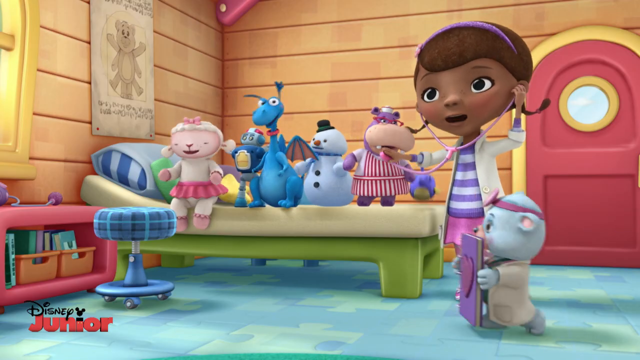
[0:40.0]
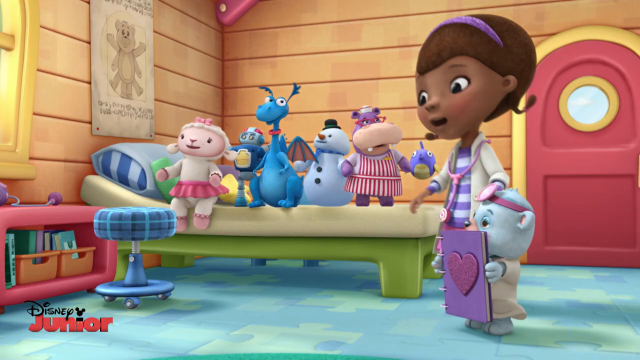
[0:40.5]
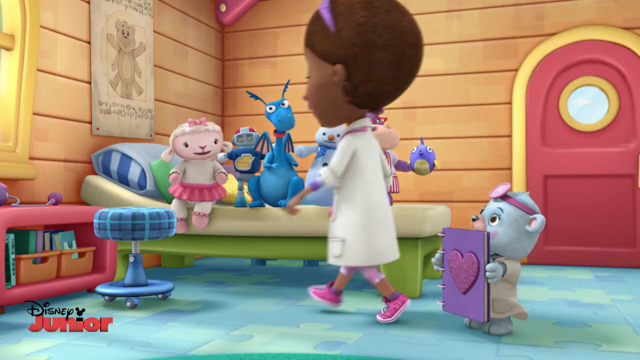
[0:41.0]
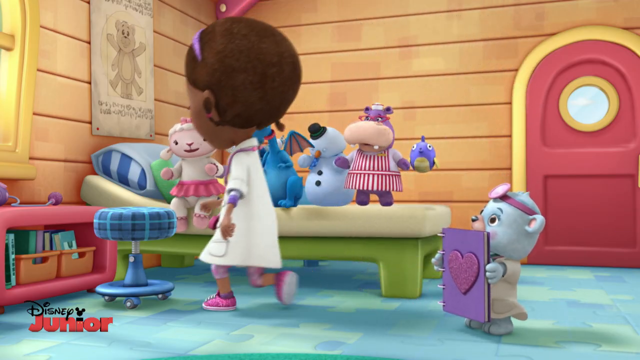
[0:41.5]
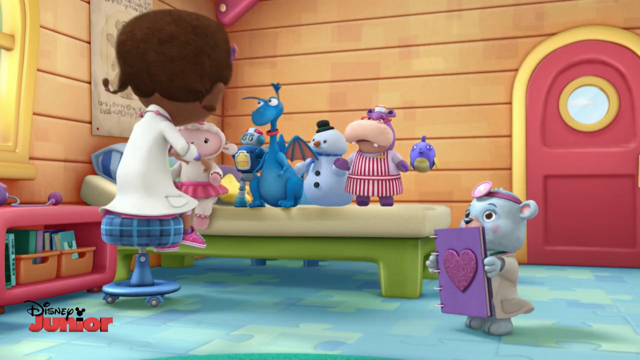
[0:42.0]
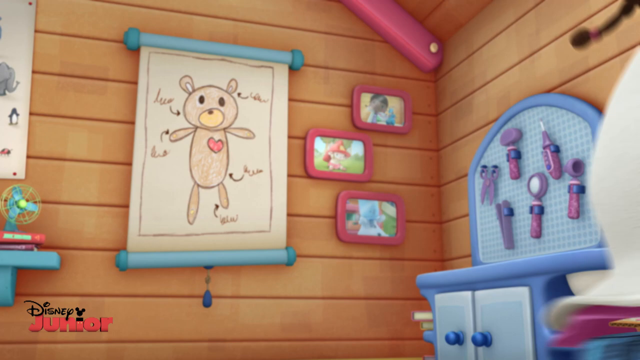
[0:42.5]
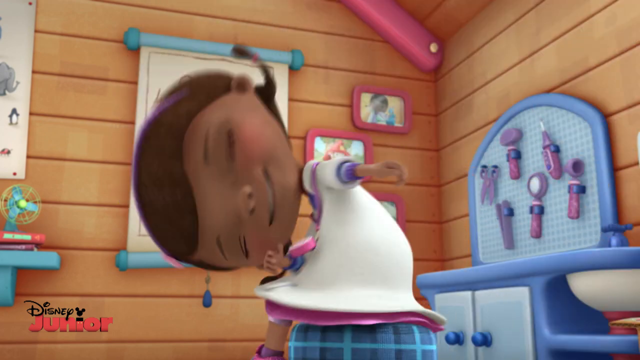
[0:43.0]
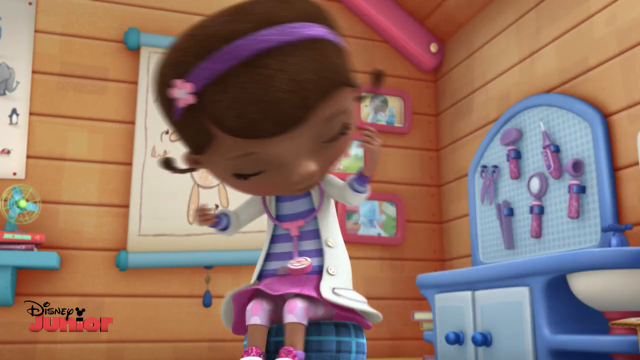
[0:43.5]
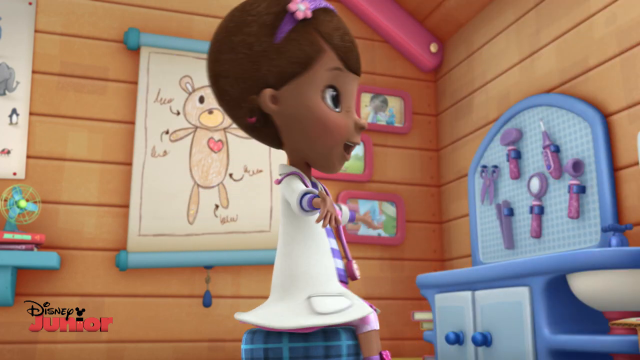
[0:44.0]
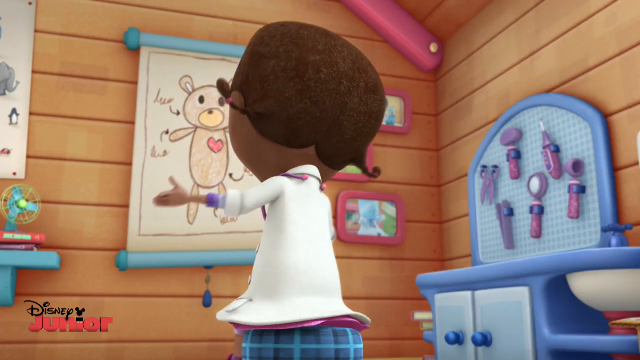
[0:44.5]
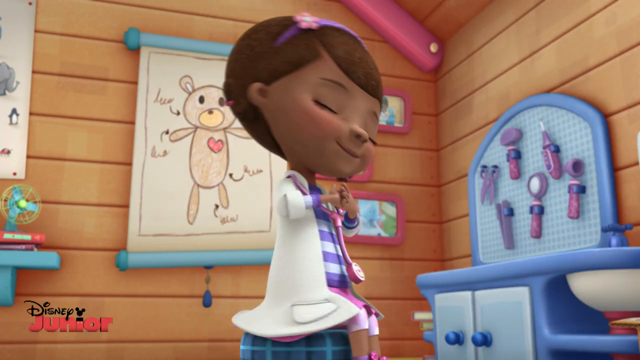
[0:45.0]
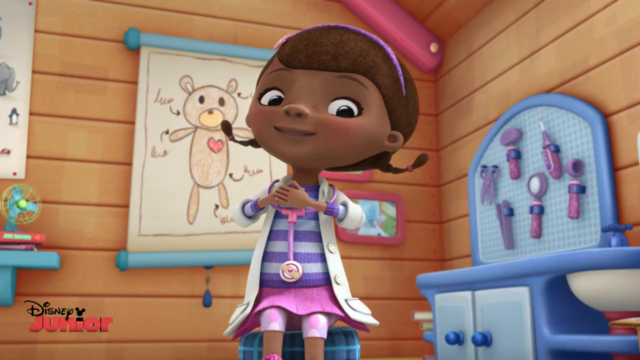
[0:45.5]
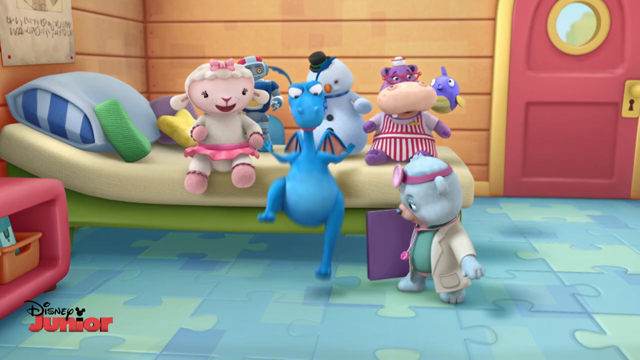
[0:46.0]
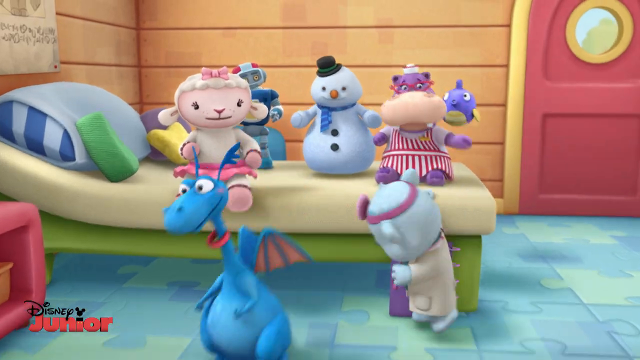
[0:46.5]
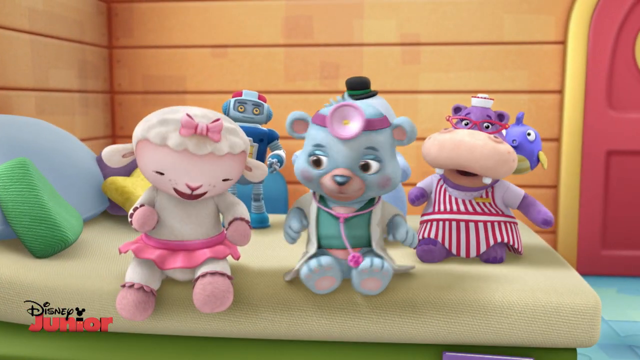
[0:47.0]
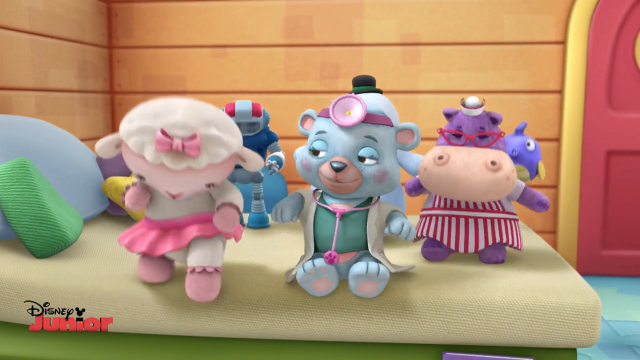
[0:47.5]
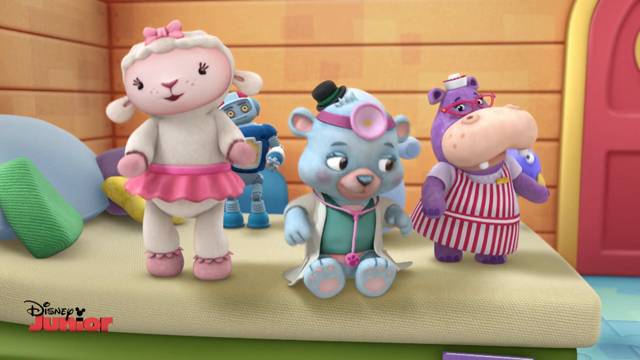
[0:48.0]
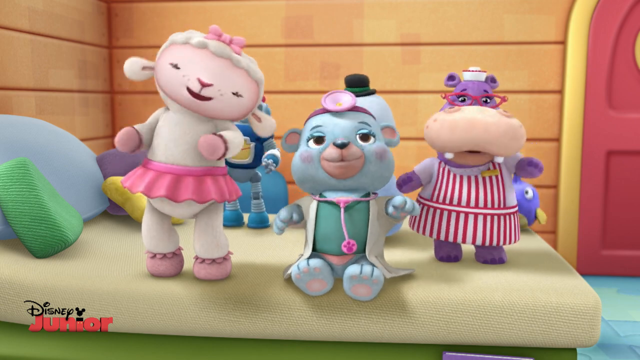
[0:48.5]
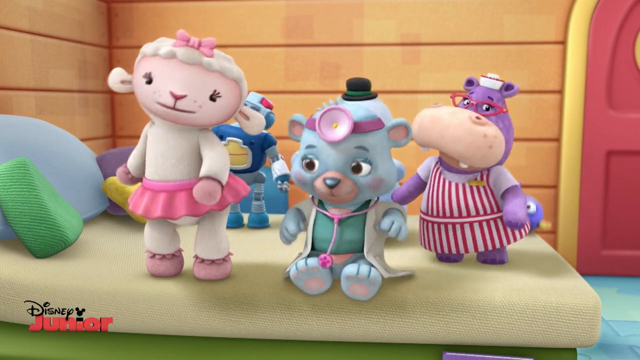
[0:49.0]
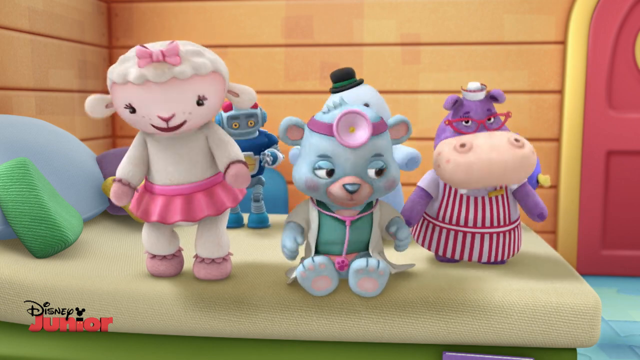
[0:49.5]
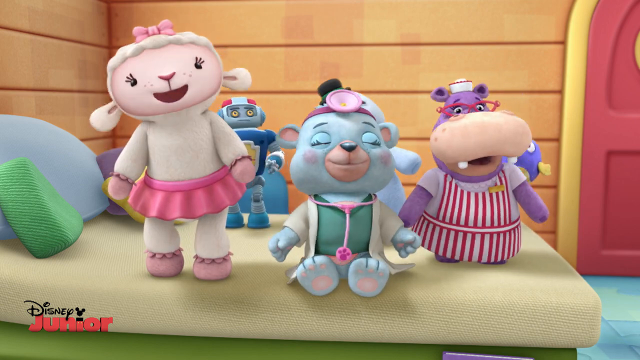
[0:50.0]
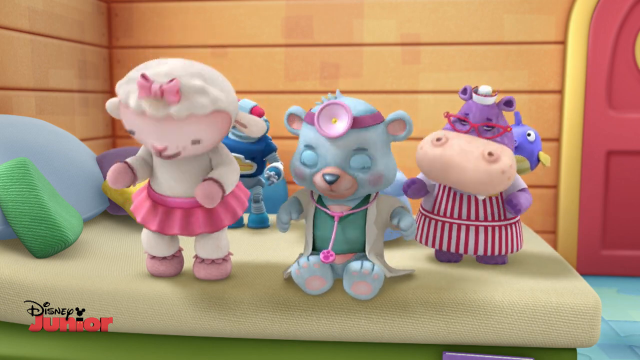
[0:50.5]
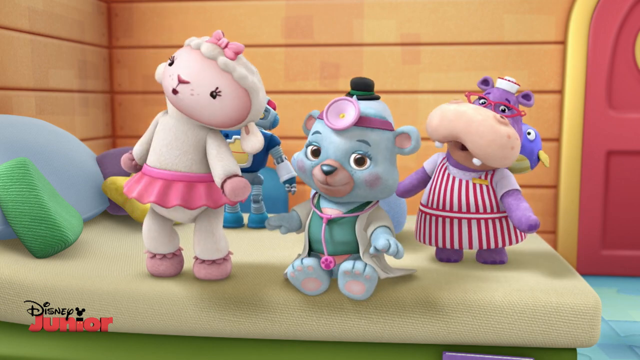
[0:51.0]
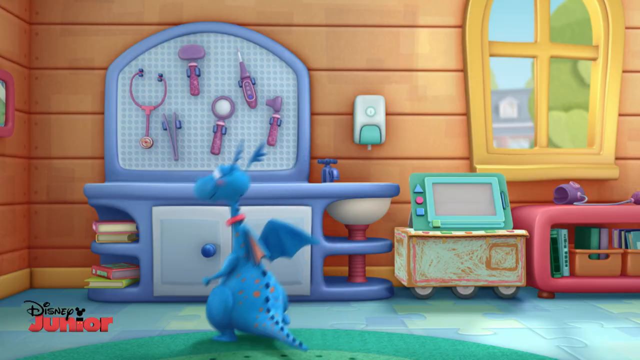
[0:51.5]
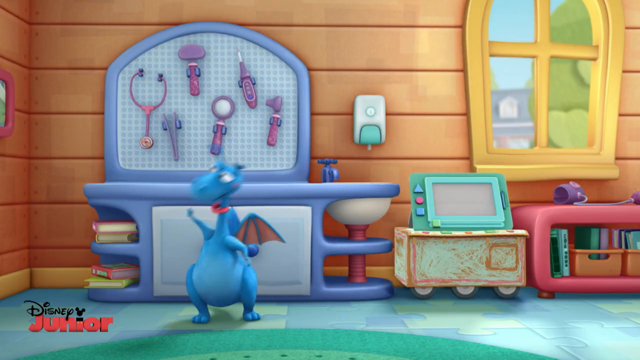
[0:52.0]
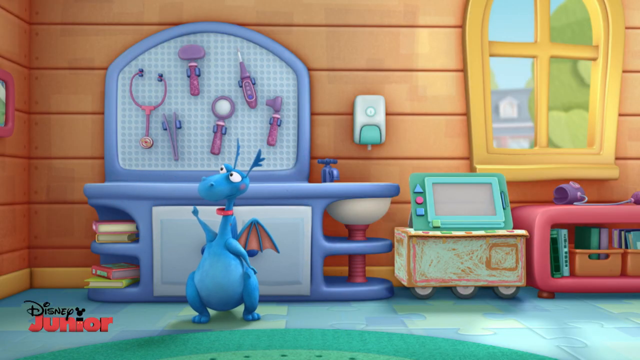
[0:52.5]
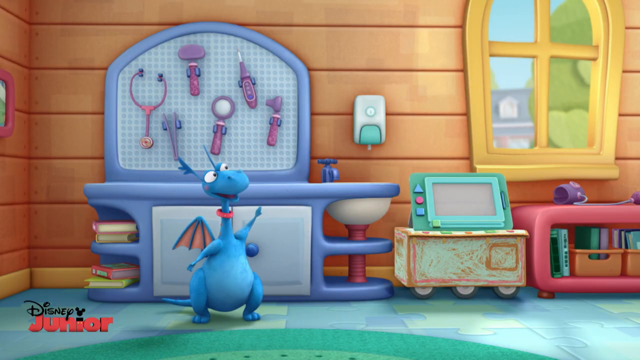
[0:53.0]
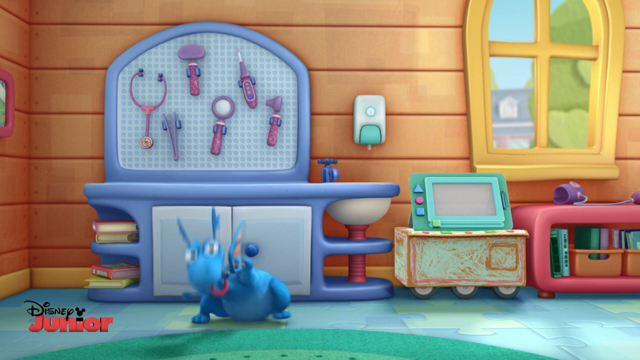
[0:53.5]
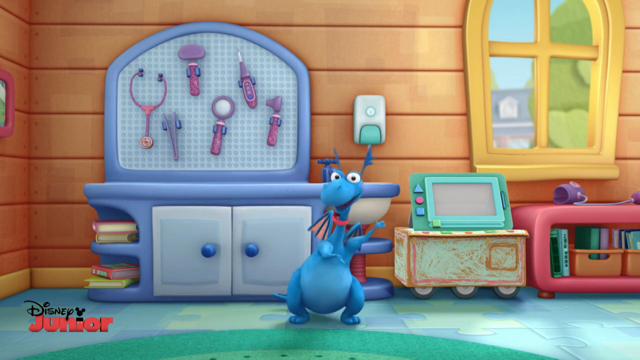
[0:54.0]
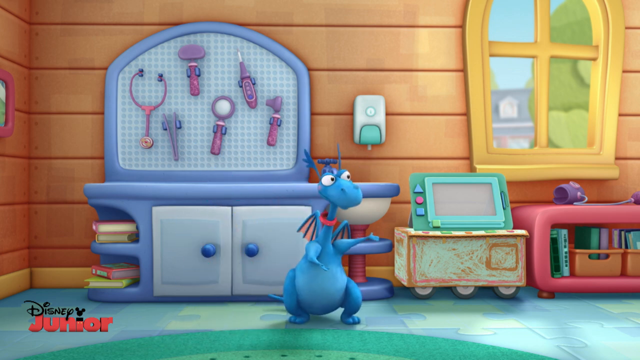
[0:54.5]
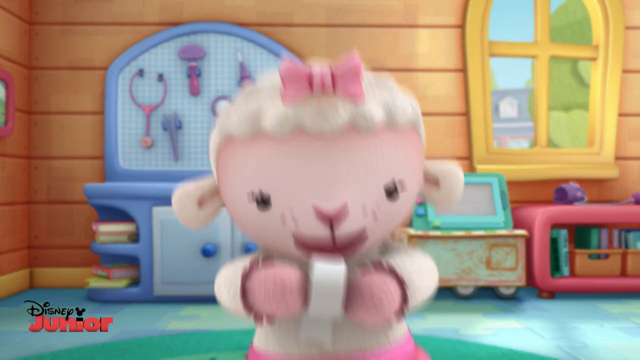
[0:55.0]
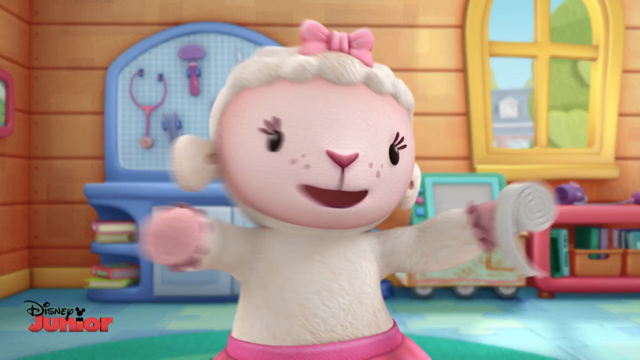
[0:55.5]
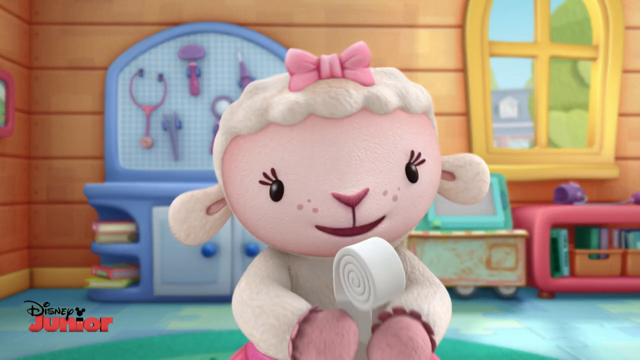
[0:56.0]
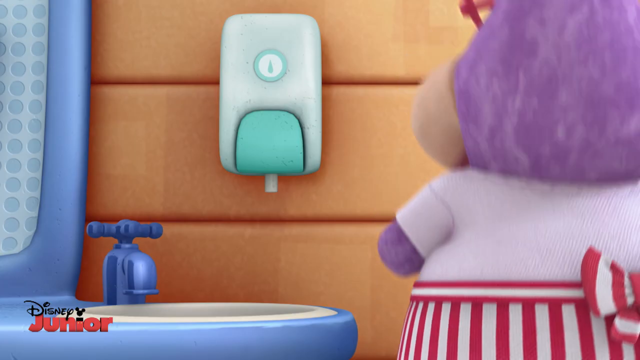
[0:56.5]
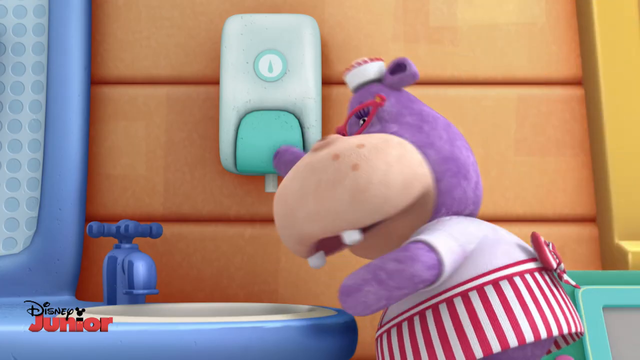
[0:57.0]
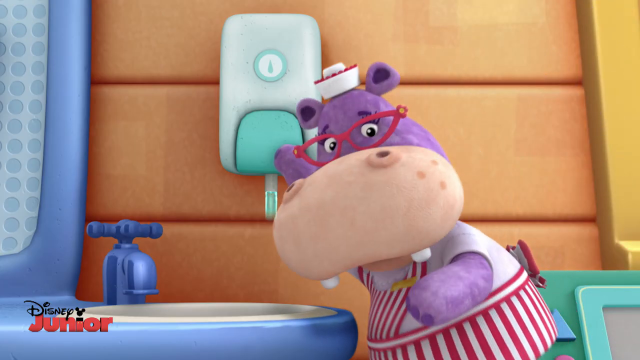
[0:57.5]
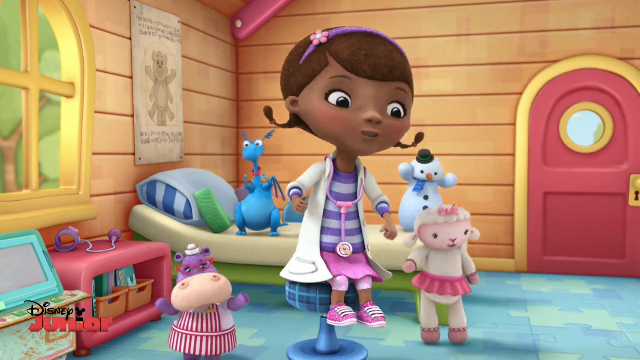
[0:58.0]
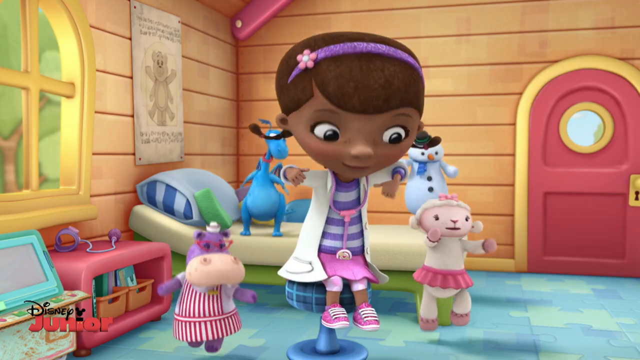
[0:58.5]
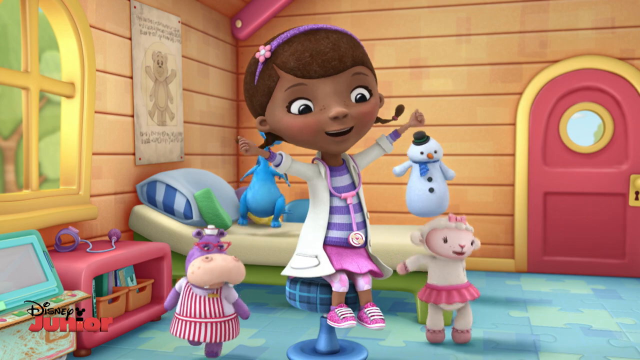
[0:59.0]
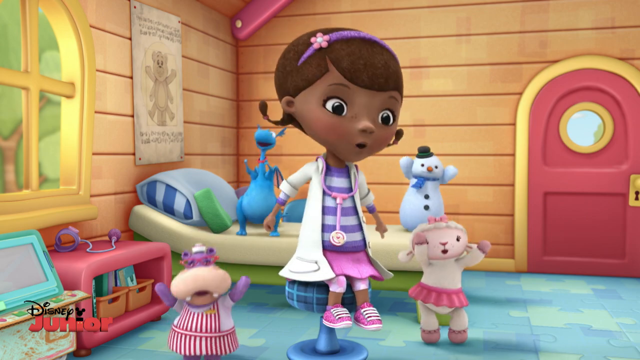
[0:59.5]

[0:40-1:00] Her eyes go wide and she lowers the stethoscope. The doctor appears holding the purple heart notebook, and together they walk side by side, turning to the left. She walks over to the stool and hops on it. The little blonde girl leans forward, then spins away into the corner of the room with her arms at her sides; as she slows down, she puts them on her chest and looks at the doctor, who holds up the notebook with his right hand. The blue dragon hops down to the ground, the doctor sits up on the bed, and a girl-looking lamb stands up on the bed. They all start dancing with the same hand motions: arms down by their sides, straightening up and shaking their heads, then looking down and up to the right, twisting and turning their heads. The dinosaur raises his right hand, walks in front of a dresser that has tools, and stands in front of it looking at the camera. He raises his right arm, then his left arm, then hops over to the left, leans to the left, and dances. The lamb girl pops up into the camera view, turns around, and throws something forward. The hippopotamus goes to the soap dispenser and presses it, and a bottle of liquid soap drops. All the characters are lined up, some on the bed and some on the floor, with their arms up. The girl sits on the chair with her arms up, looking down and smiling, and swings her arms up and down as she dances with them.